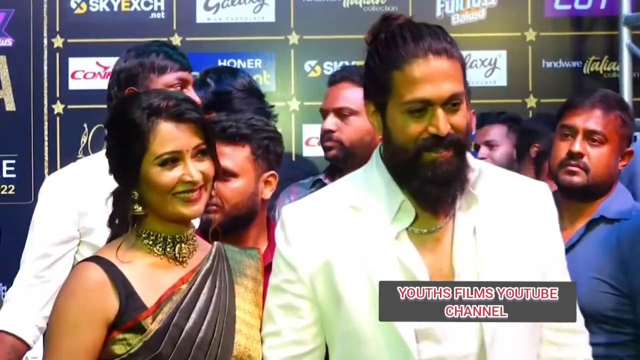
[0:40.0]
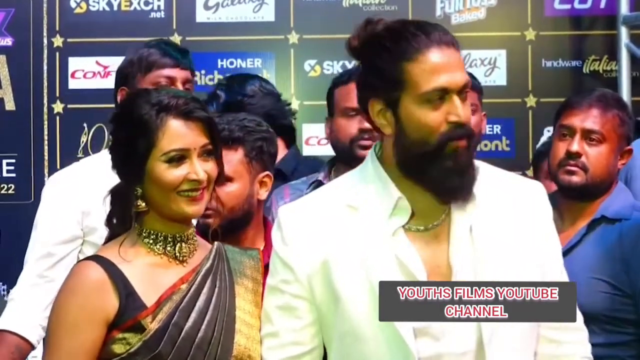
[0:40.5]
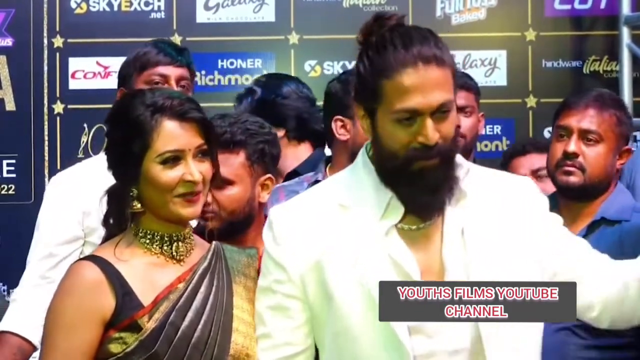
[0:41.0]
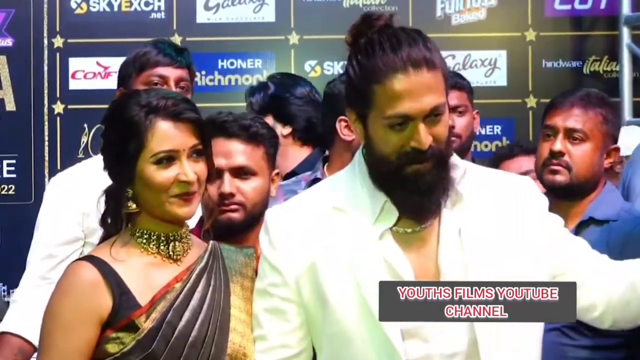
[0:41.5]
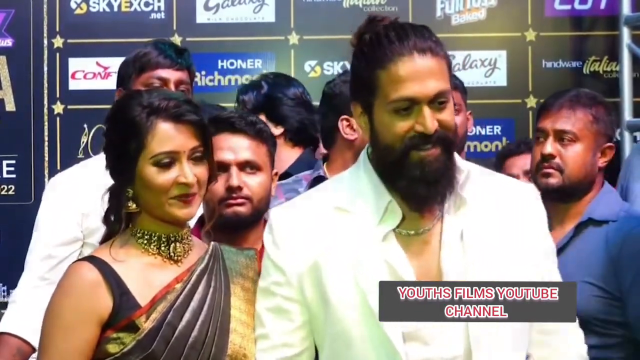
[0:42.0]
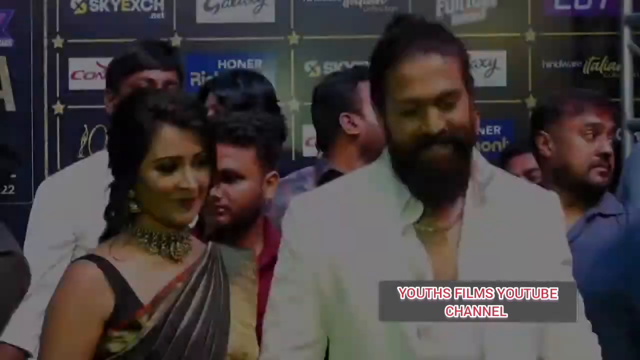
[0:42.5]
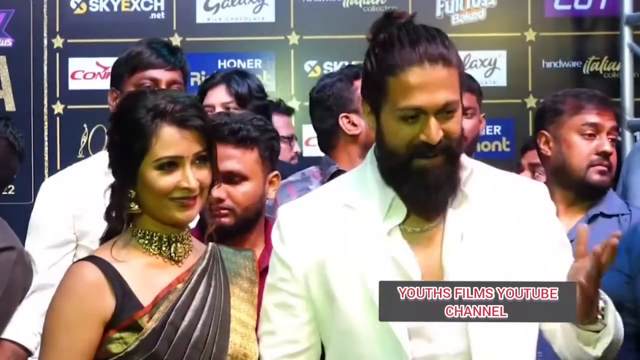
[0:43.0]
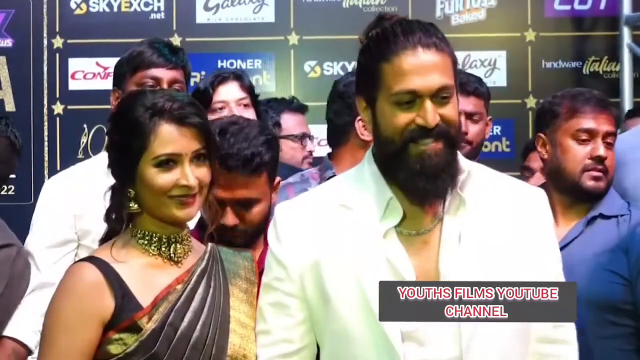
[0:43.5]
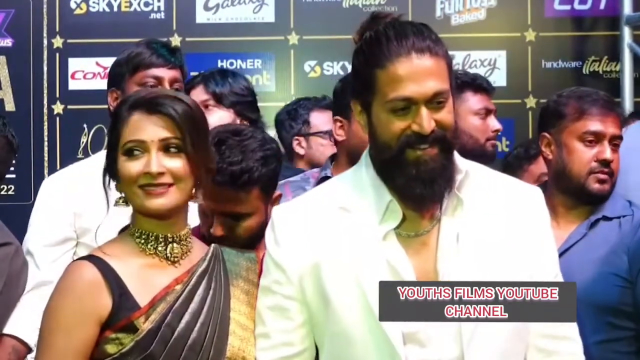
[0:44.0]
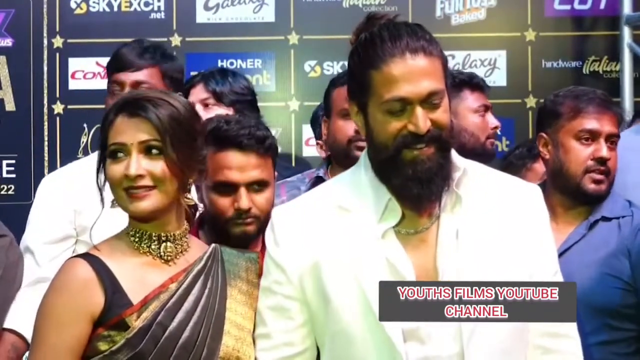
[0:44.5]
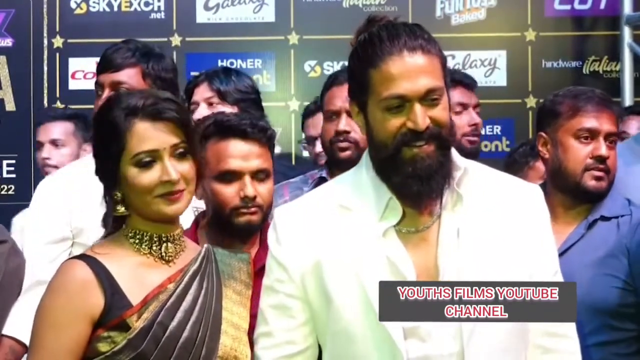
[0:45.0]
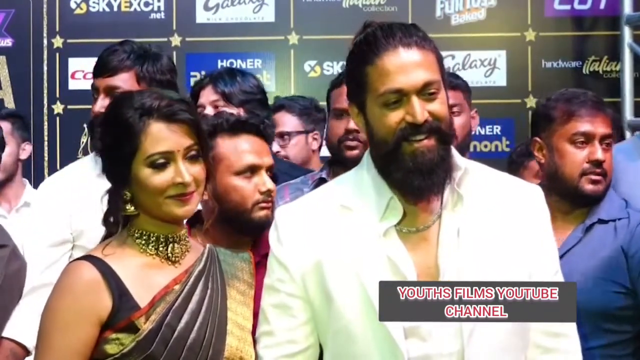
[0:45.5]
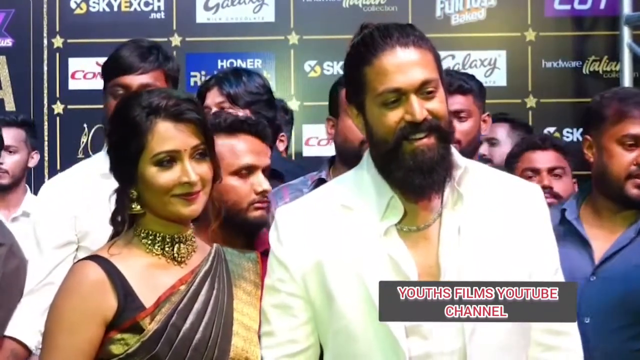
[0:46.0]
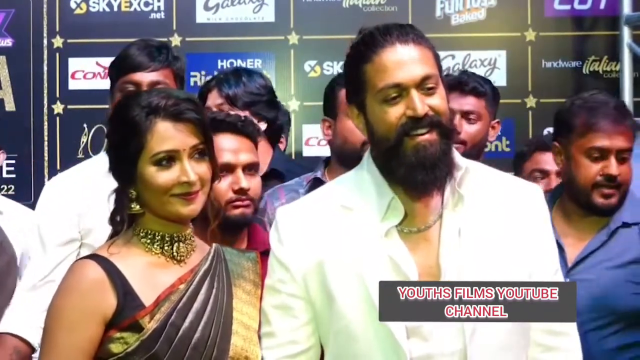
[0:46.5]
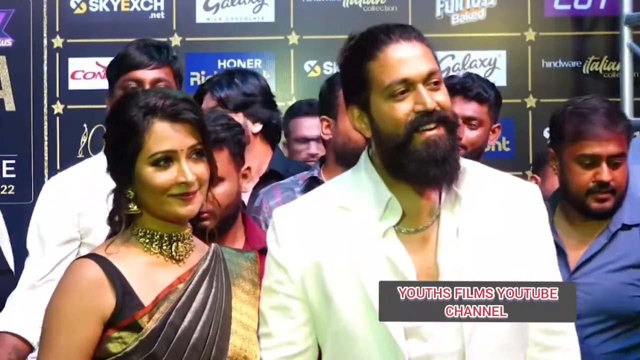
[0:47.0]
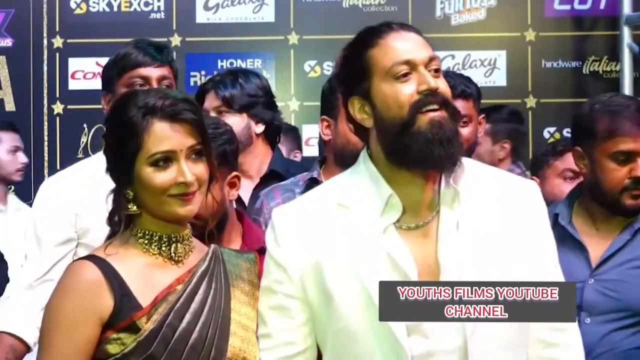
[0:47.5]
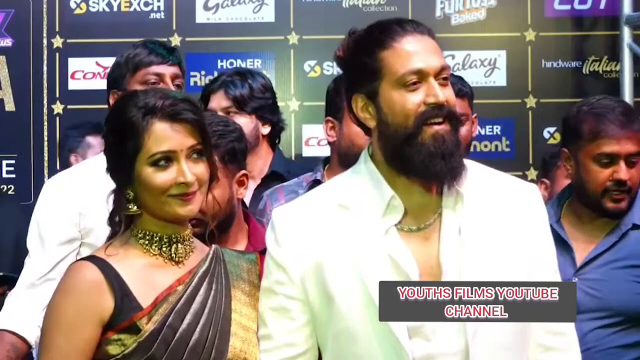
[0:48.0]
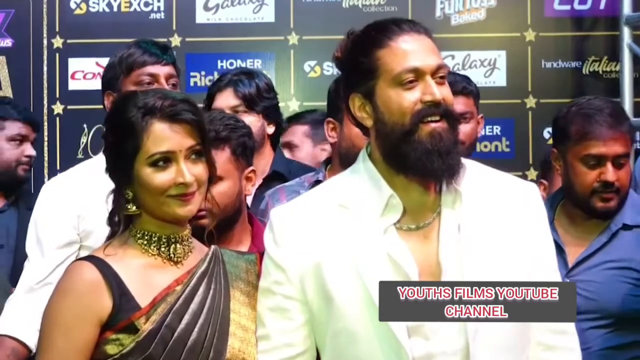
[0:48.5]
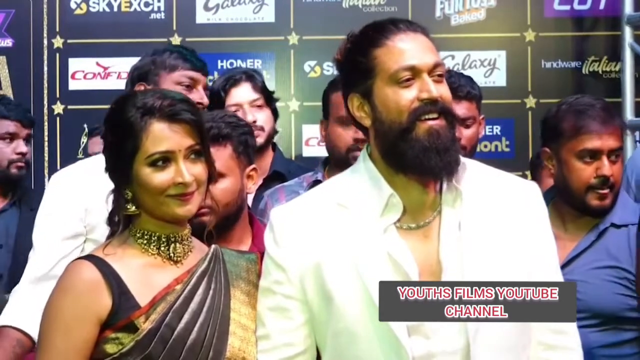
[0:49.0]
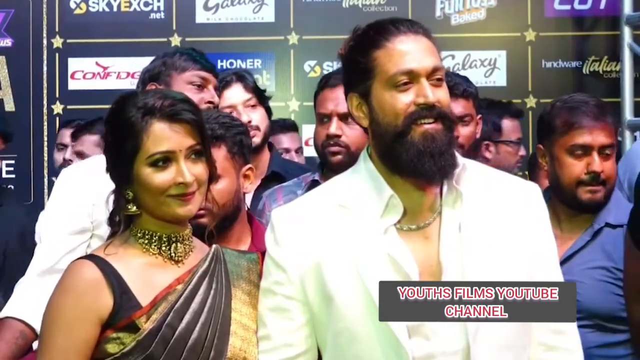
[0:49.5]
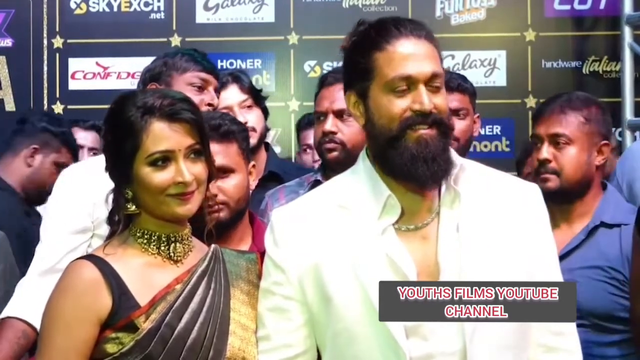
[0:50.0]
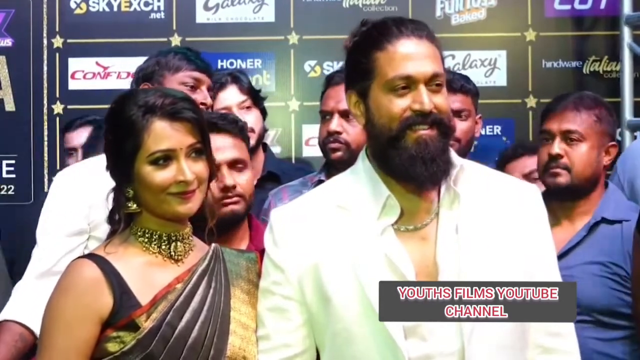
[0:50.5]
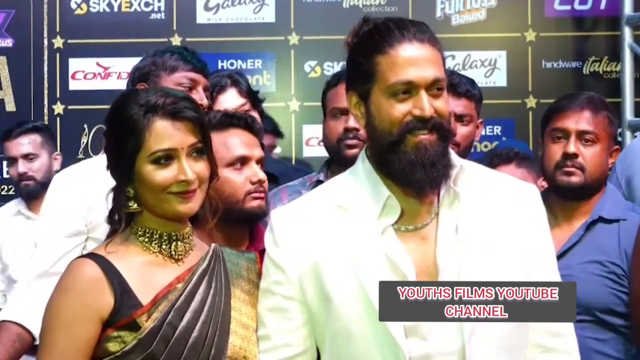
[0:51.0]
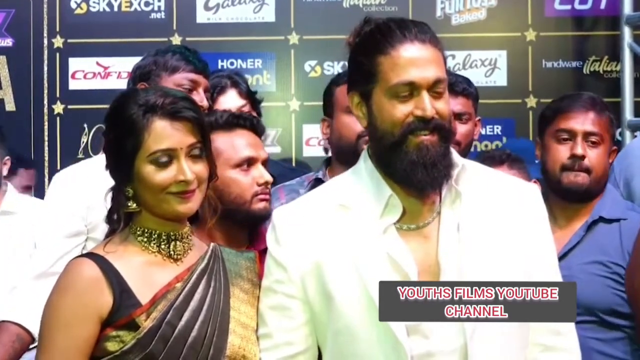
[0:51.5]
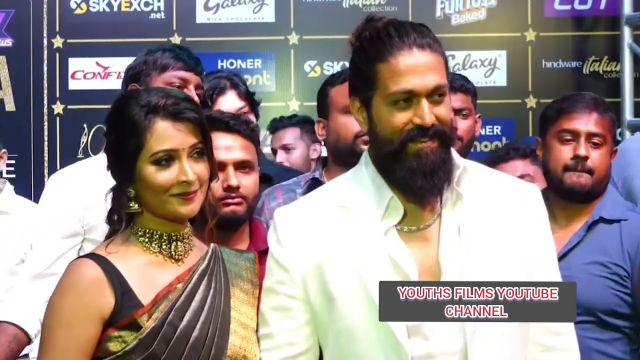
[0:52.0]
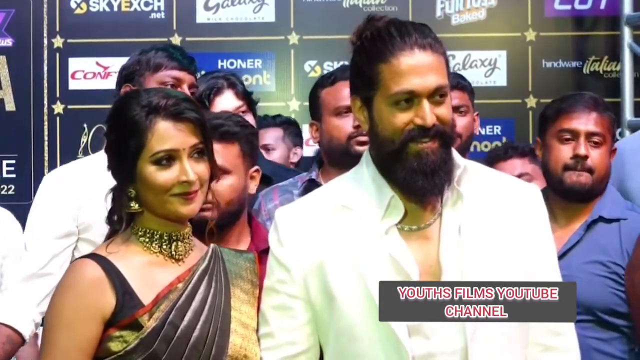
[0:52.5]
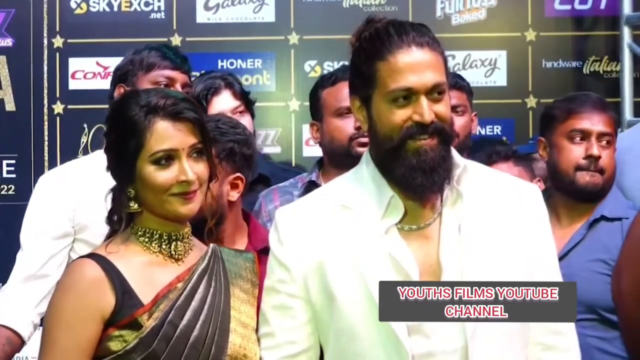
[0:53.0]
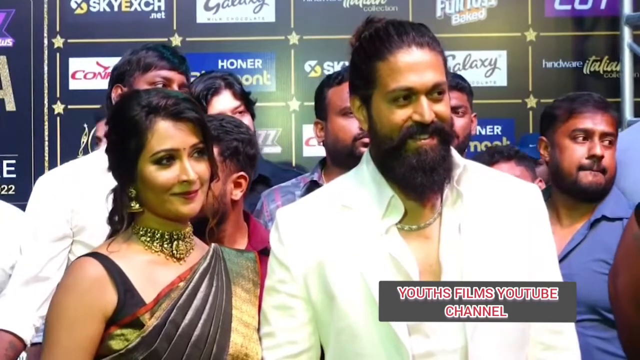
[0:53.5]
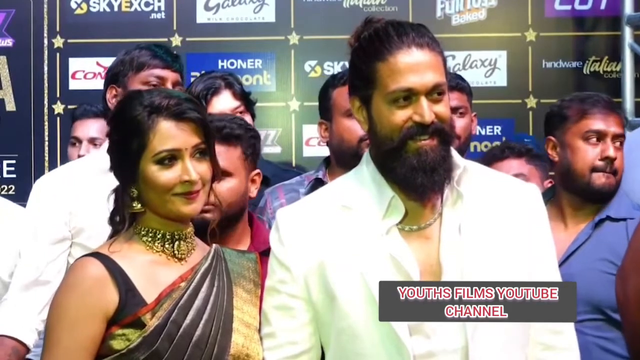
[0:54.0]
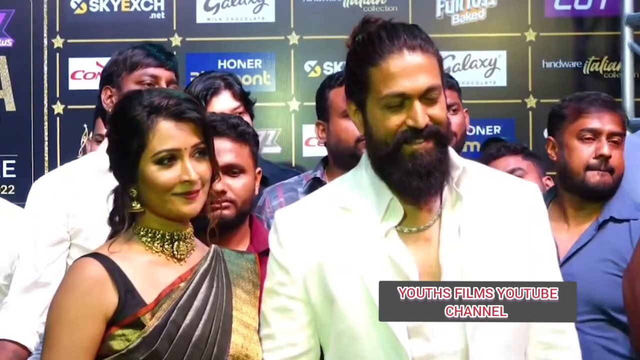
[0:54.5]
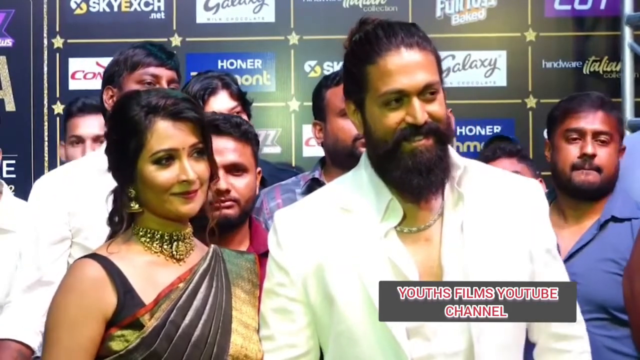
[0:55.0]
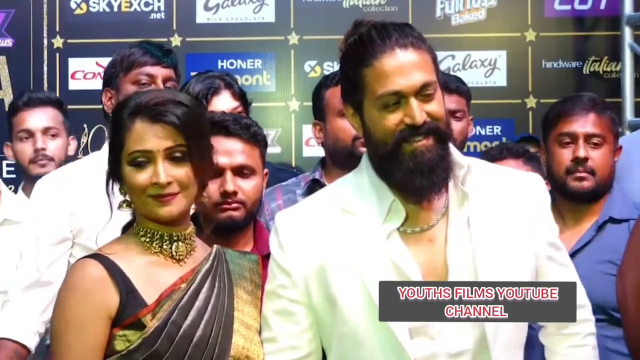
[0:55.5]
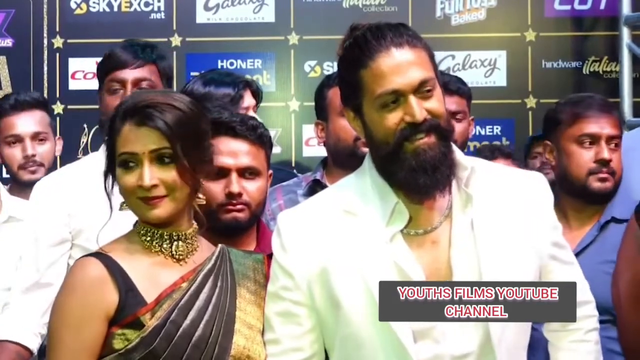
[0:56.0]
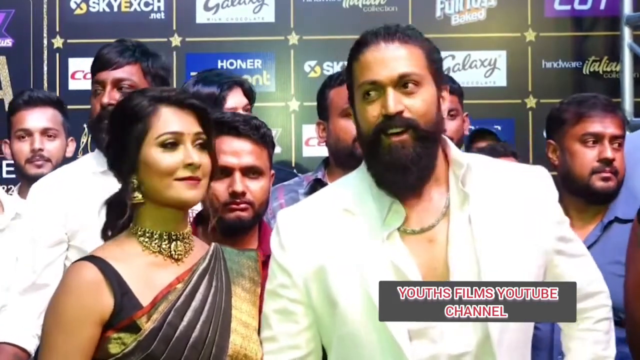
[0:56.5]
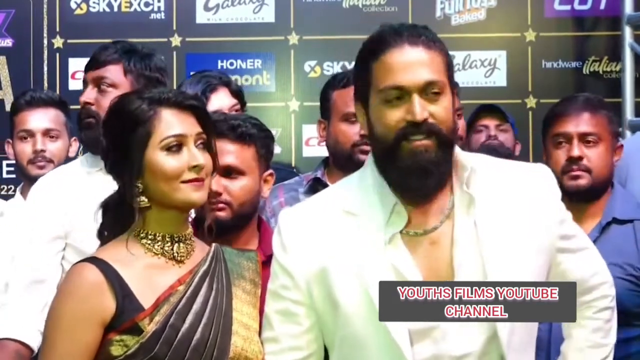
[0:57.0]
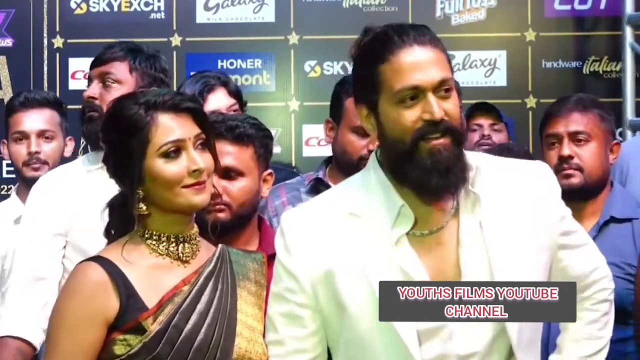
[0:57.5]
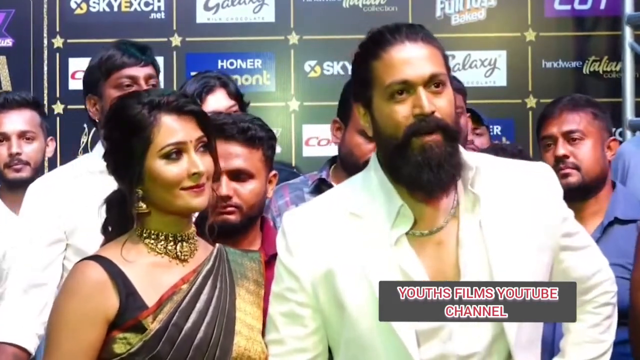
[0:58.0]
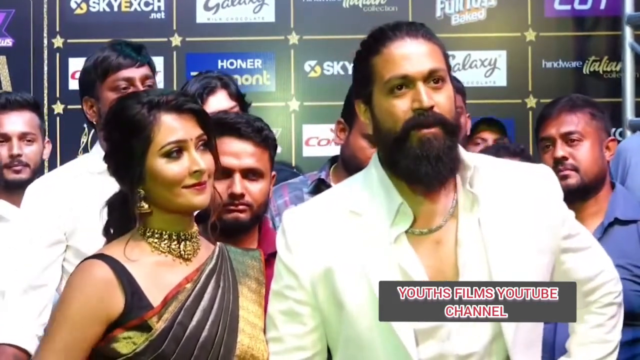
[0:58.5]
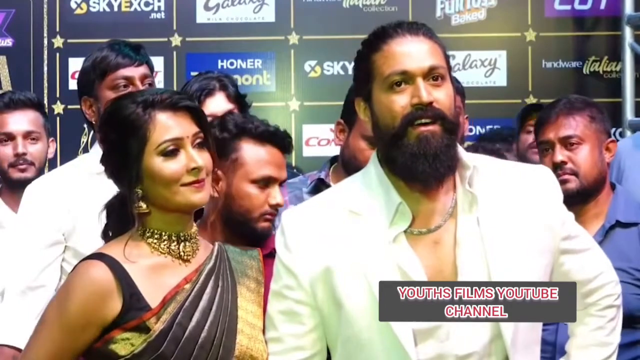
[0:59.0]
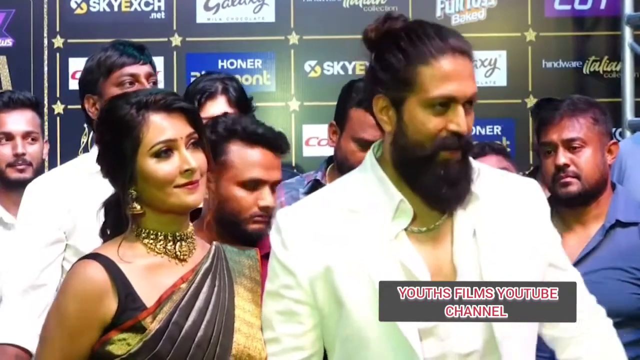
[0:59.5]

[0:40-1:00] The couple stands in front of a camera being interviewed, apparently at an event. The man wears a white suit with a white shirt unbuttoned to the mid chest, has a full beard and mustache, and his black hair is slicked back somewhat into a high bun. He also wears a simple gold chain across his neck. The woman on his right wears a brown and gold sari with chunky gold statement jewelry, a necklace and earrings, and she smiles as the man answers questions from the press. There appears to be a crowd of people behind them in clothing of different colours, blue, red and white, holding cameras and crowding around the couple. There also seem to be logos lit up behind everybody, apparently showing who has sponsored the event; many logos for different businesses are visible behind them. At the bottom of the screen, red text outlined in white reads "youths films YouTube channel" in a kind of gray bar.